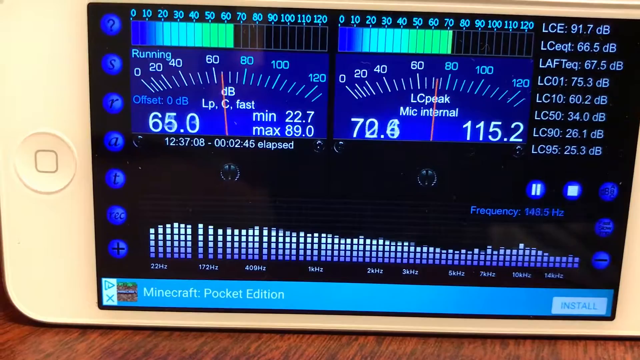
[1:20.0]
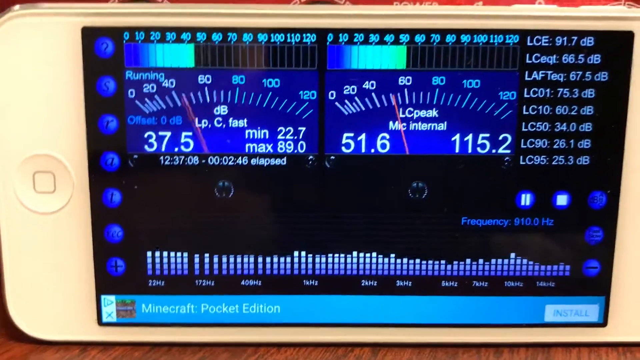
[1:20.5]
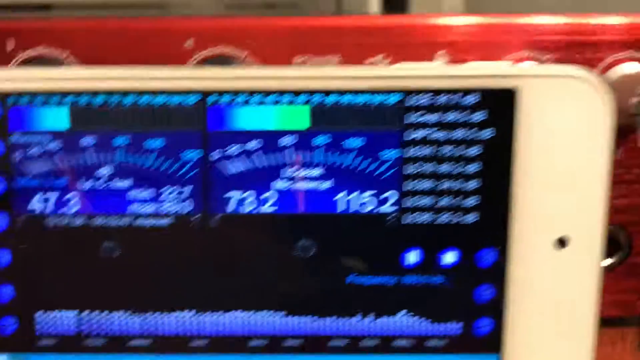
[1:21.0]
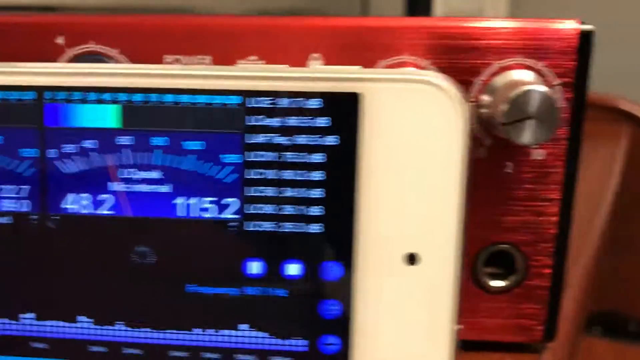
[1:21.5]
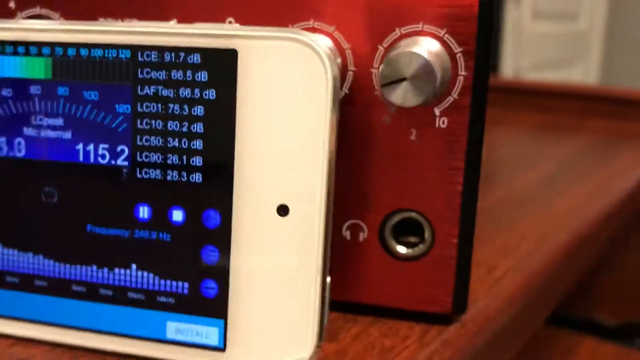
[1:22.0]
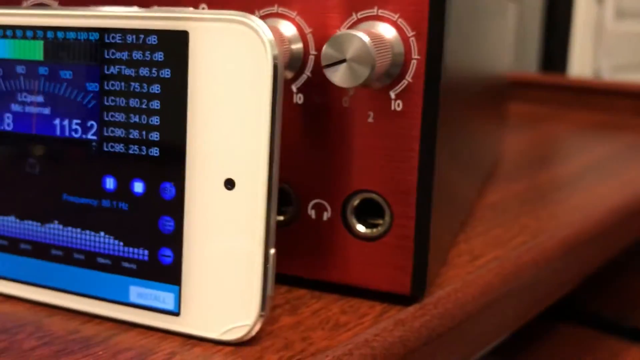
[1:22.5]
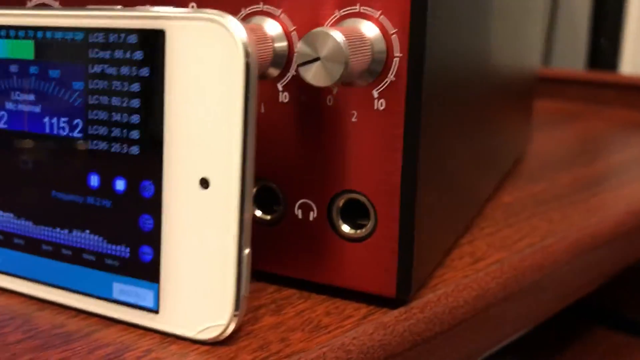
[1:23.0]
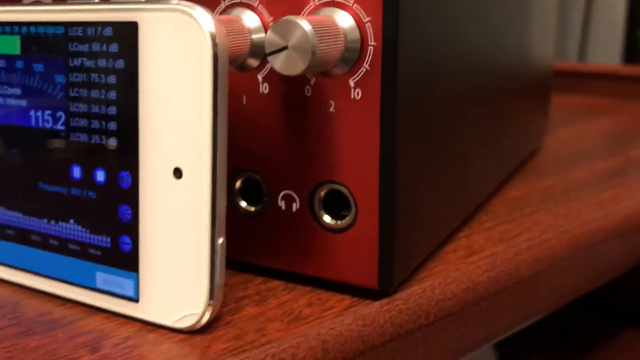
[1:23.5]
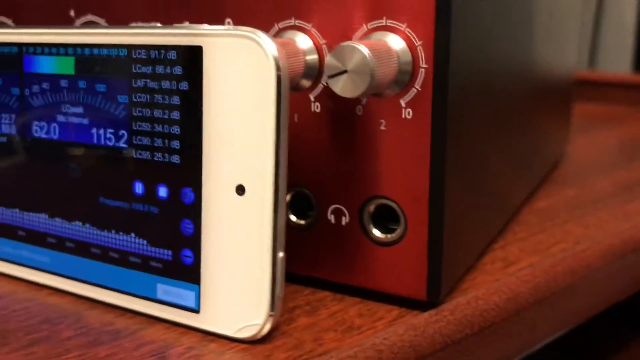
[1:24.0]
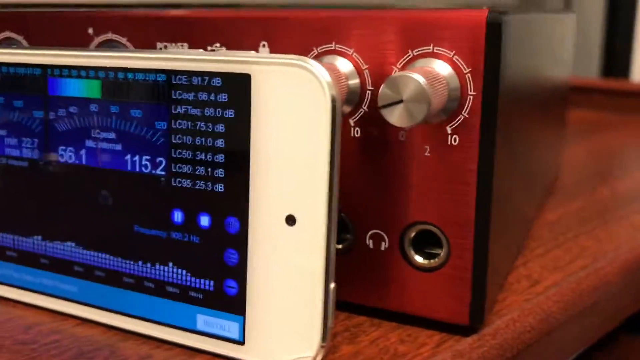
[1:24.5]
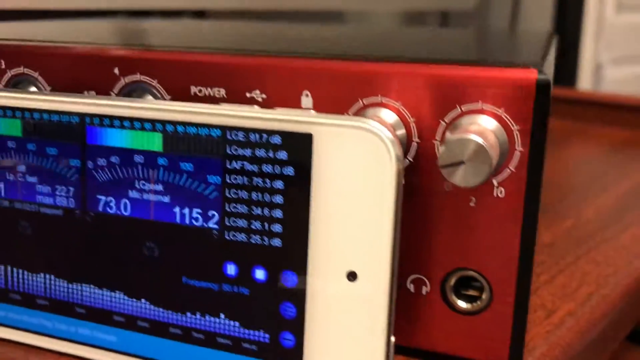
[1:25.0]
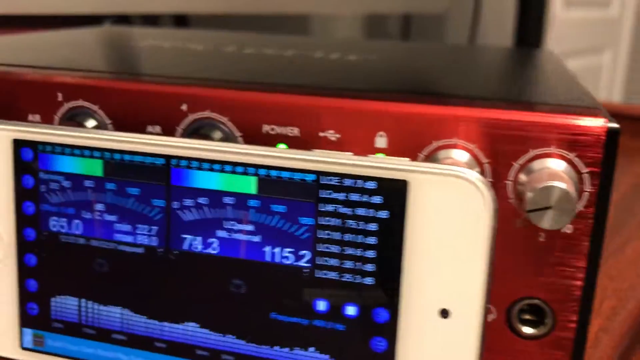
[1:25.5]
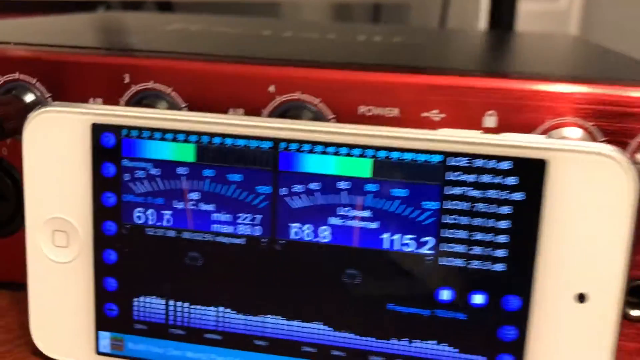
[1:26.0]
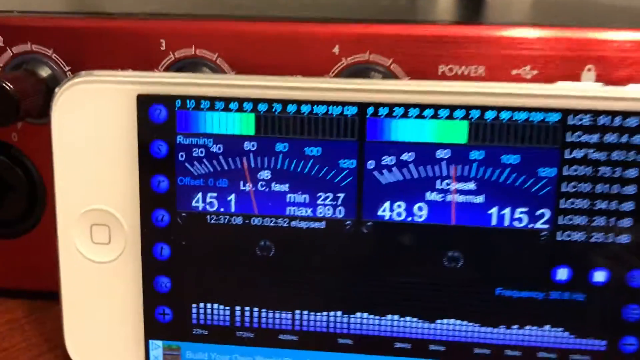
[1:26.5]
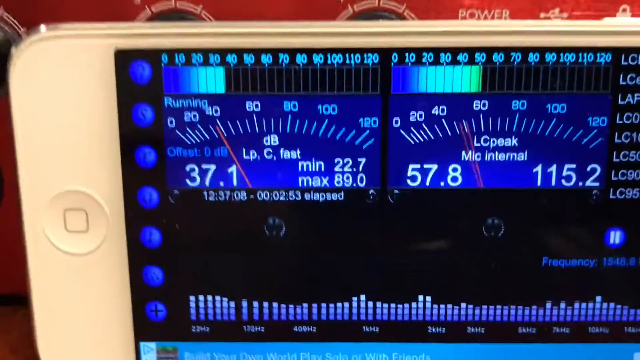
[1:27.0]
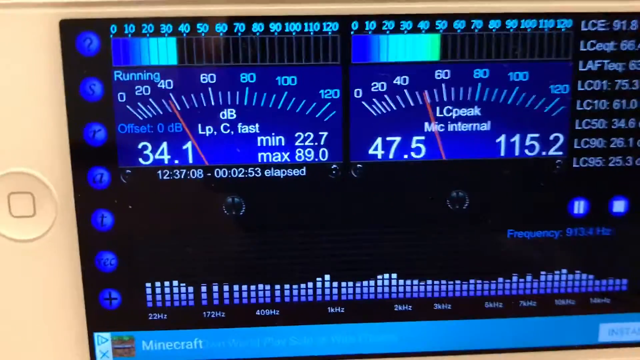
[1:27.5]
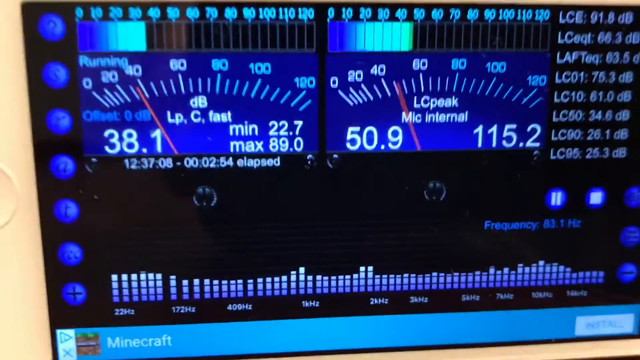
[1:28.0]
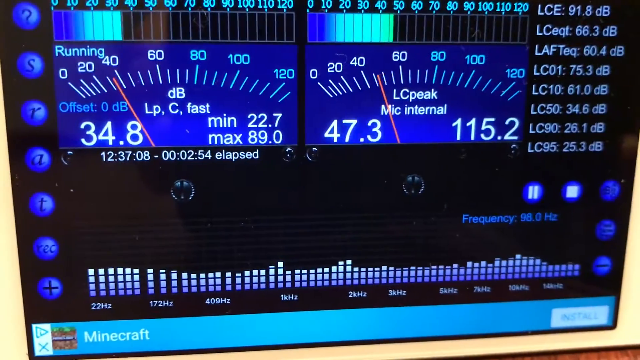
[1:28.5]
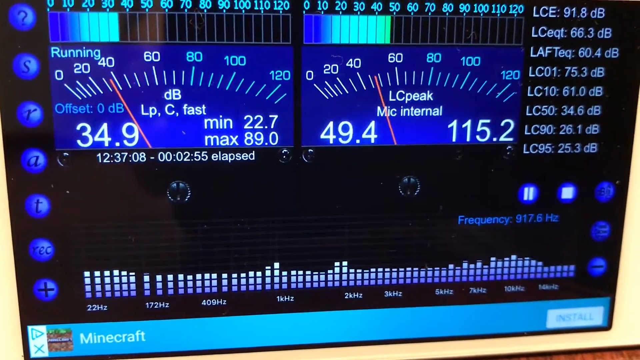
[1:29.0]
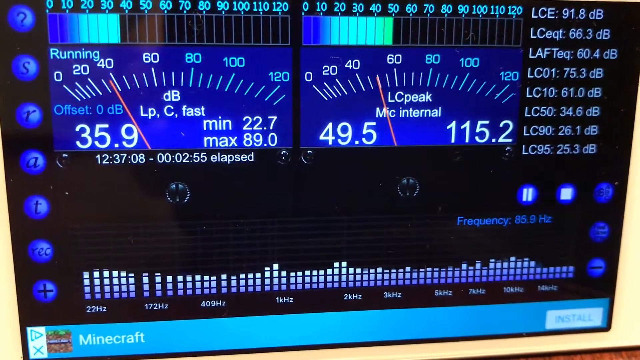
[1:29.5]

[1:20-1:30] The shot opens zoomed in on a white, older-model iPhone that looks like an iPhone 12, running an app that measures decibels and gauges levels, with various numbers on the right-hand side and blue icons on the left. The camera pans up toward a box behind the iPhone, a piece of recording equipment, possibly a synthesizer, that is red and black with silver knobs on the right-hand side. After panning slightly over to it, the camera returns to the iPhone and zooms in really close. The app is black with dark blue features: gauges and bars that show peaks, various icons, and a stop and a pause button.